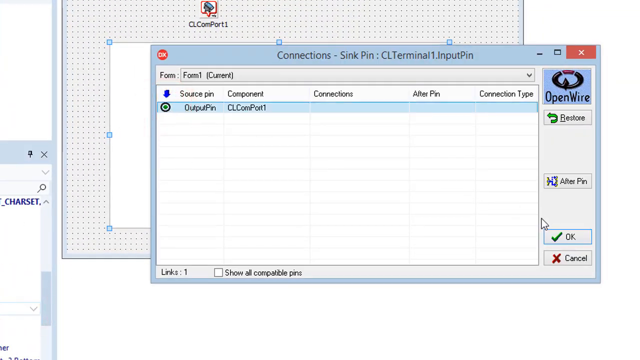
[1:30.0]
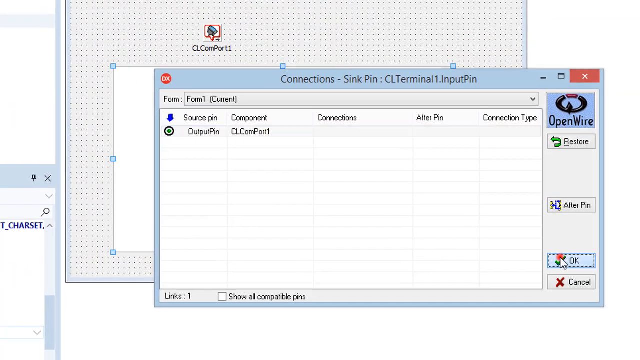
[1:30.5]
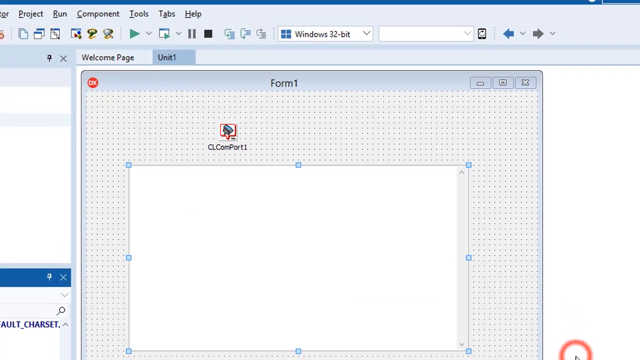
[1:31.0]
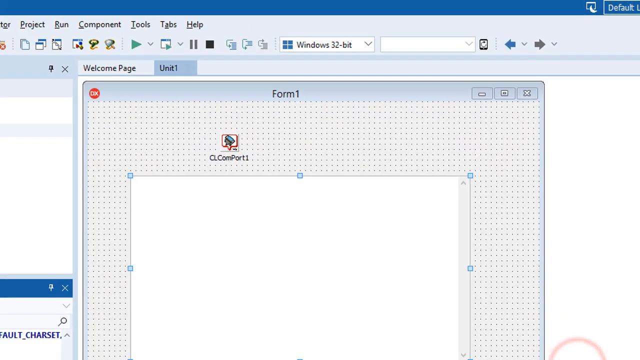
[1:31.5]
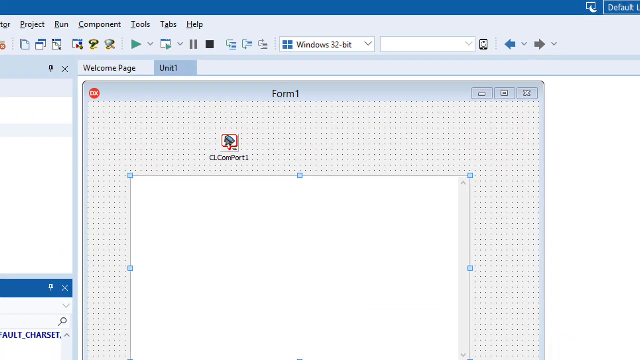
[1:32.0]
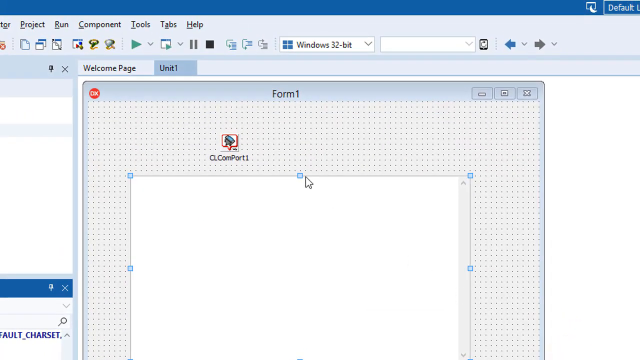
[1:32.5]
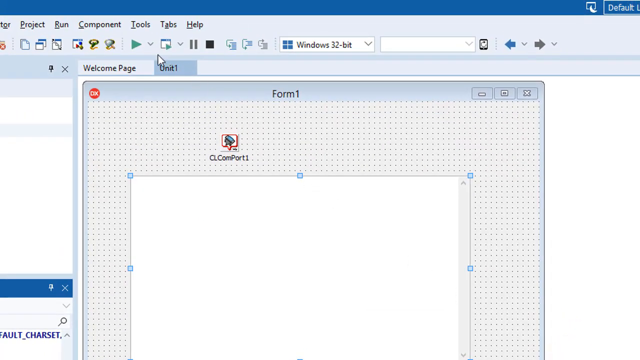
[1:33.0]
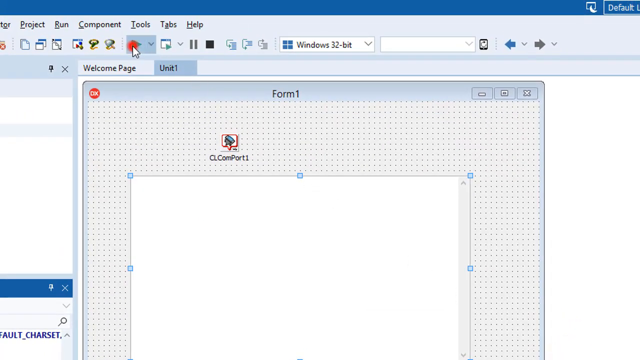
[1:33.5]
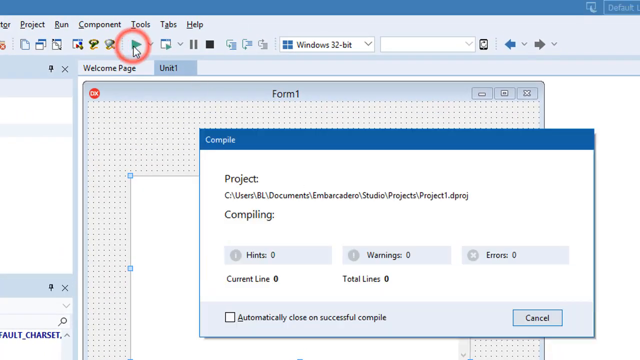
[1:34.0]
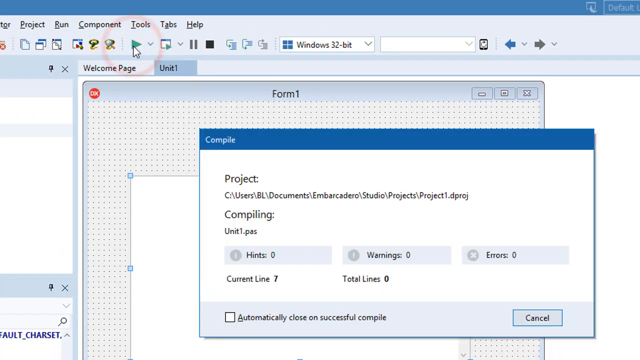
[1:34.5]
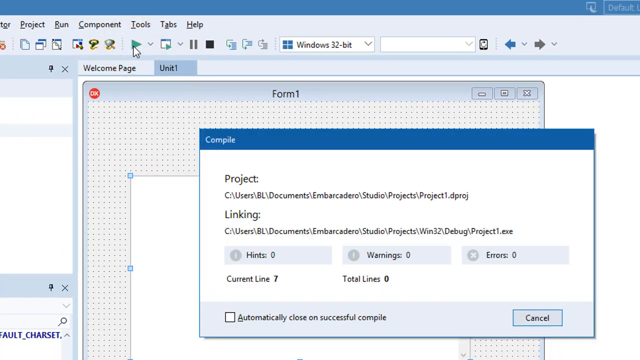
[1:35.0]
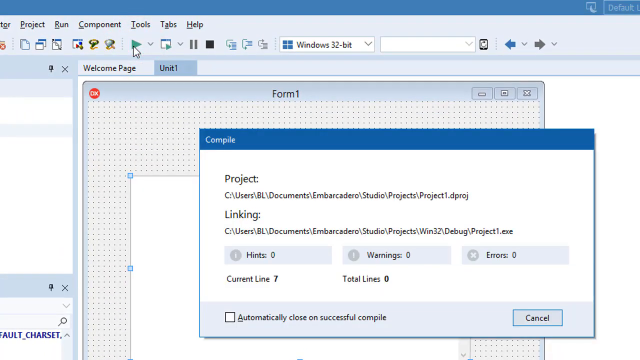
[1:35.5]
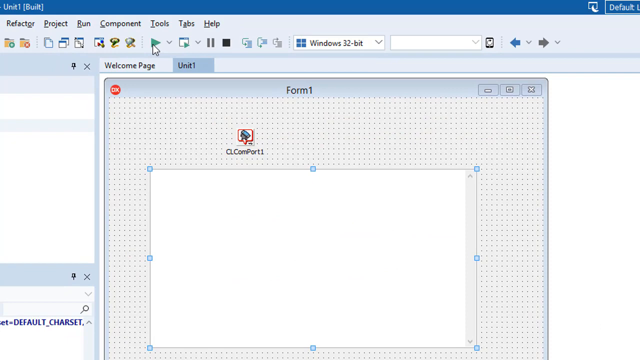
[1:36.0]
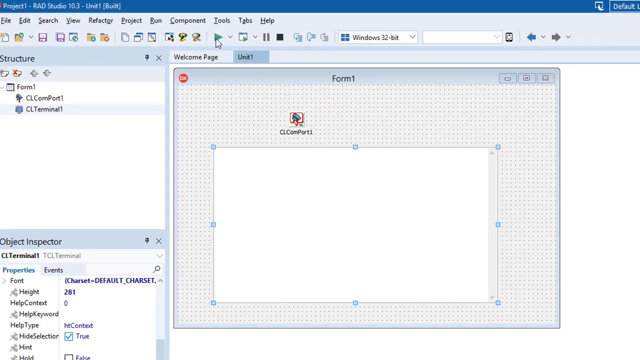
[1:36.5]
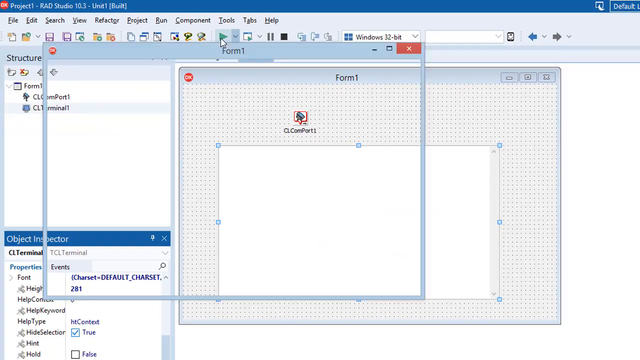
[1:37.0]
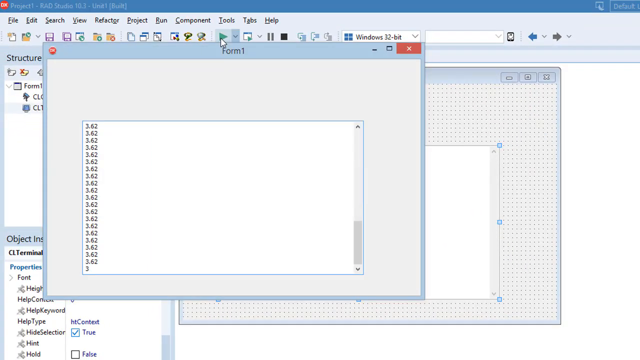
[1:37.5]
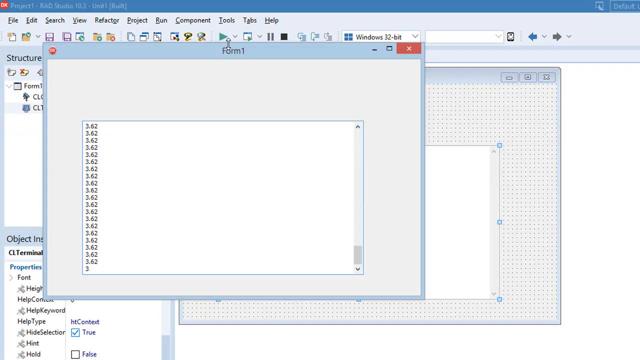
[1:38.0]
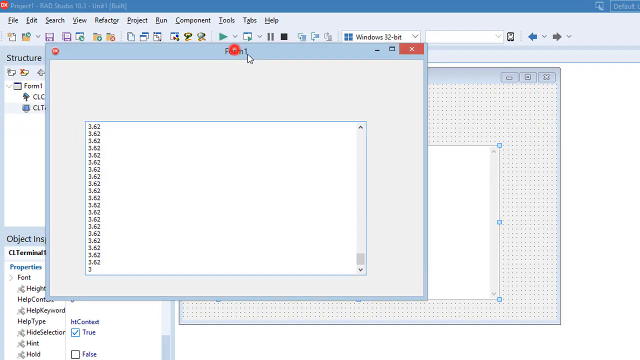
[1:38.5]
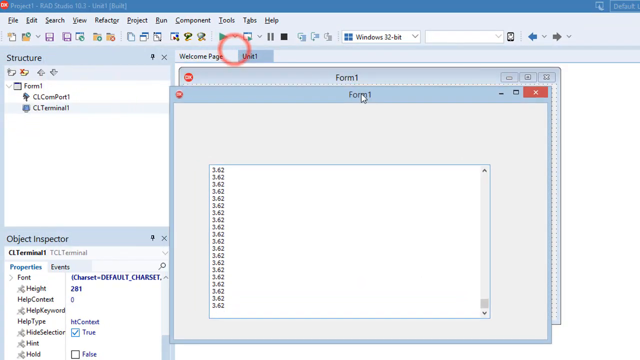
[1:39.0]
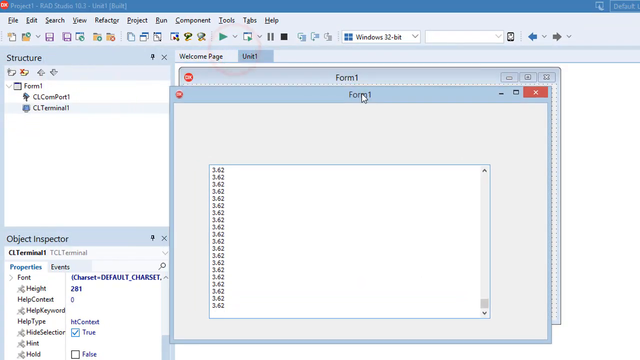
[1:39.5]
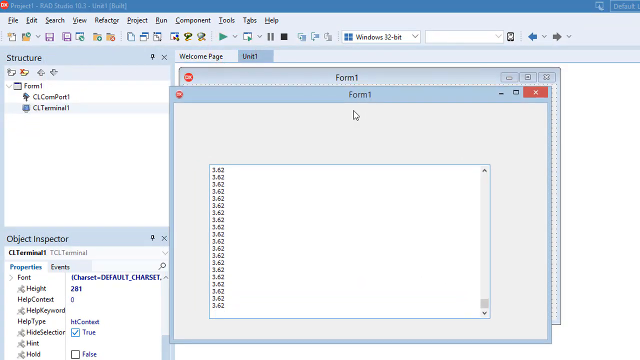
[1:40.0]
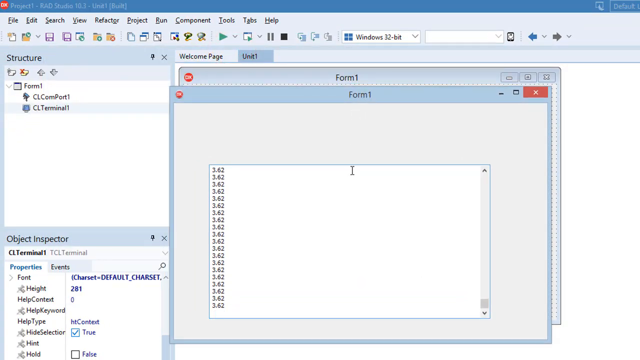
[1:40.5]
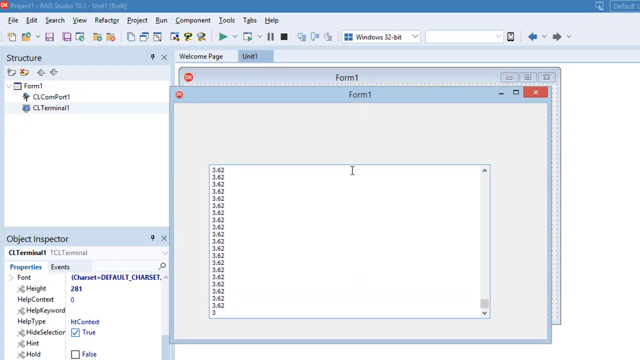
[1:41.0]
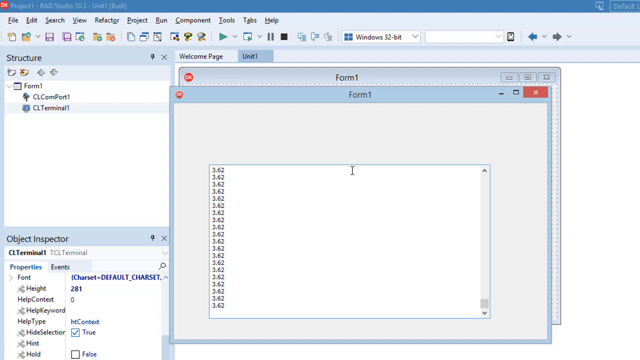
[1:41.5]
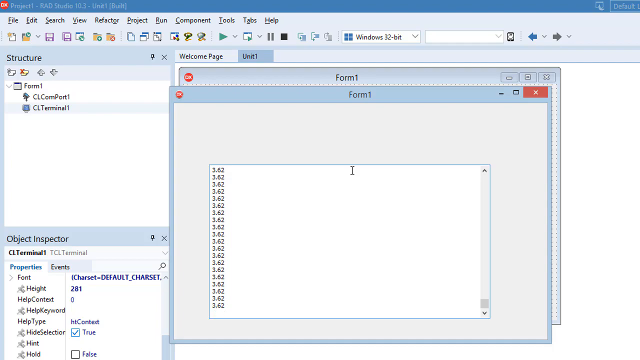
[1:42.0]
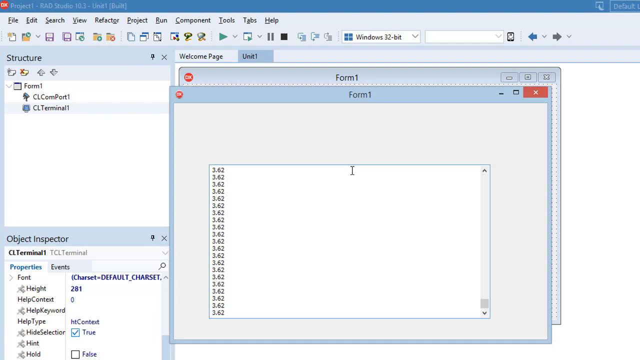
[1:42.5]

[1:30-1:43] A pop-up says "connections - sync ping: cl terminal one.input pin", and on it is "open wire". There seems to be a form, with "Form one" selected, which shows "current" inside two lines, and a downward arrow. What seems to be the top menu includes pin component connections and pin connection type. Under source pin it says "output pin", under component it says "cl comp port one", and at the very bottom it says "links one". There is a checkbox that says "show all compatible pins". The user seems to hover over OK and then clicks OK. They go back to the screen and click a play button, and the form kind of starts playing, showing "playing 3.62" over and over. It seems to be a programming tool.